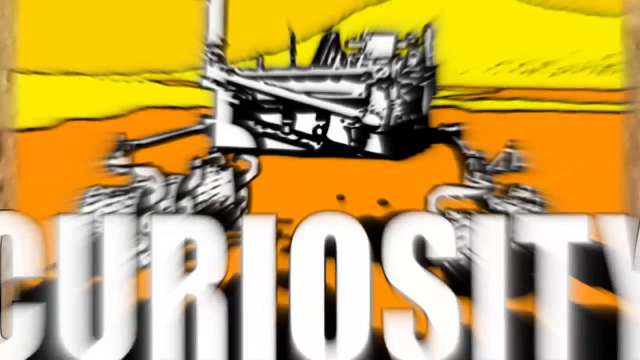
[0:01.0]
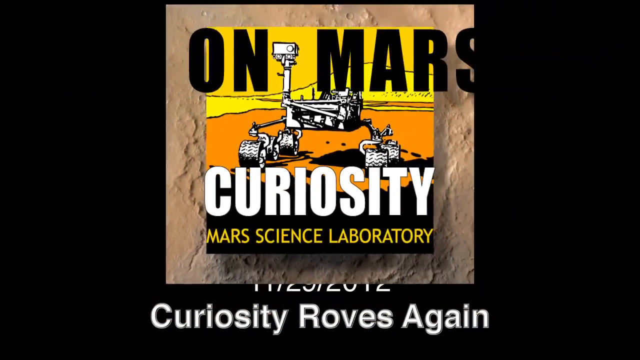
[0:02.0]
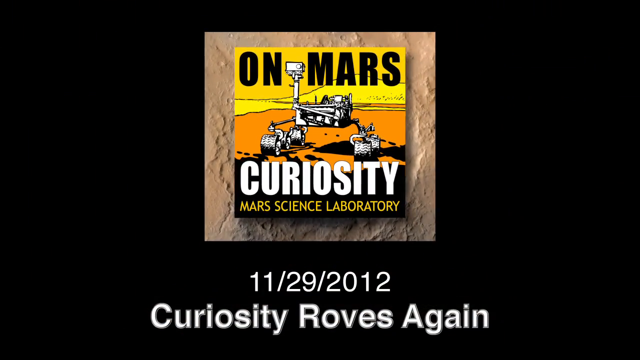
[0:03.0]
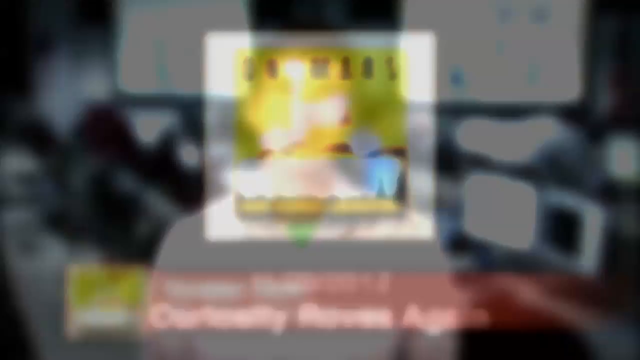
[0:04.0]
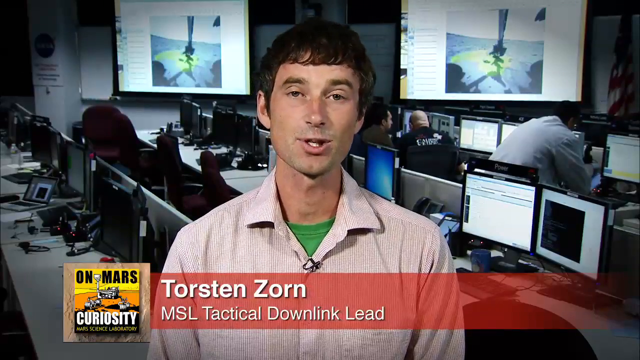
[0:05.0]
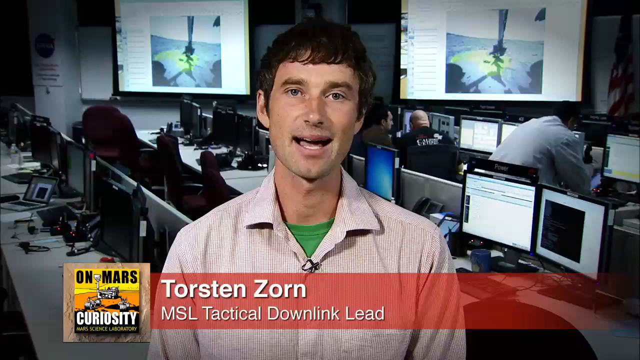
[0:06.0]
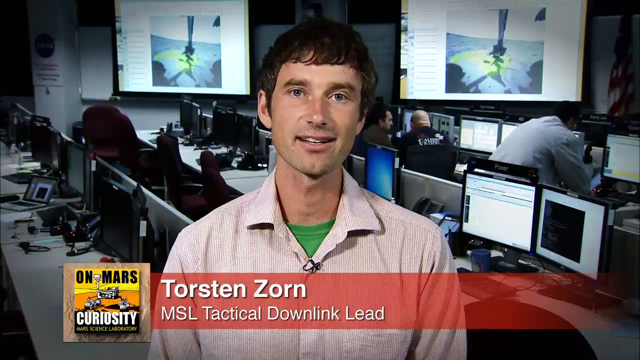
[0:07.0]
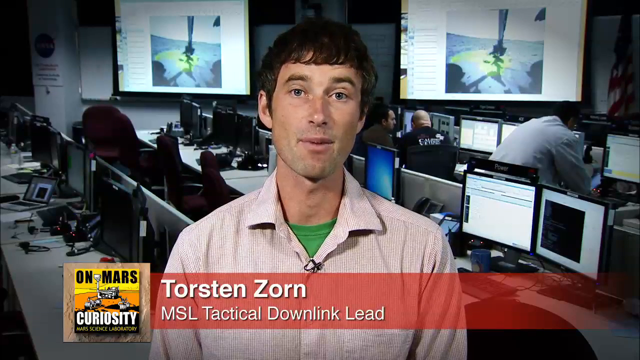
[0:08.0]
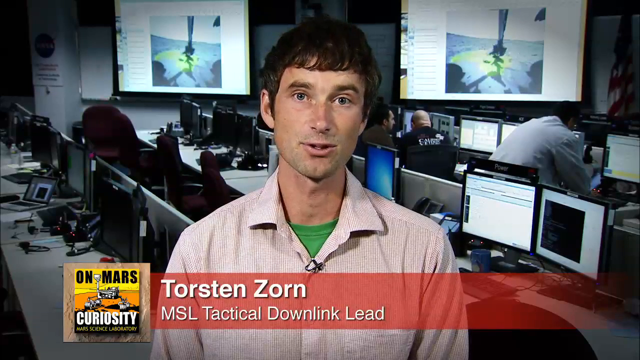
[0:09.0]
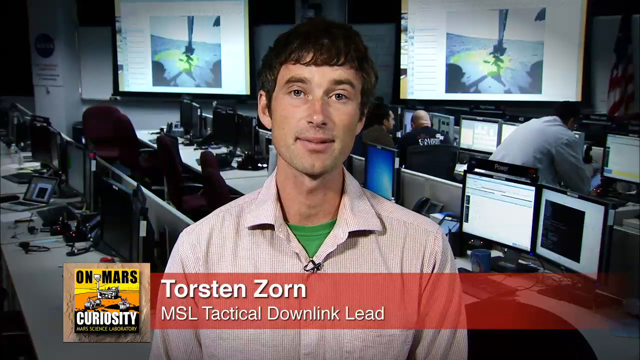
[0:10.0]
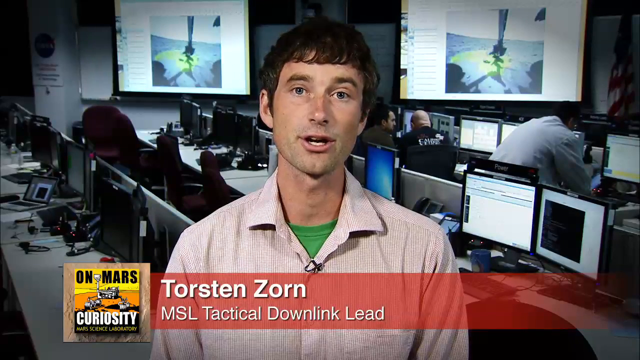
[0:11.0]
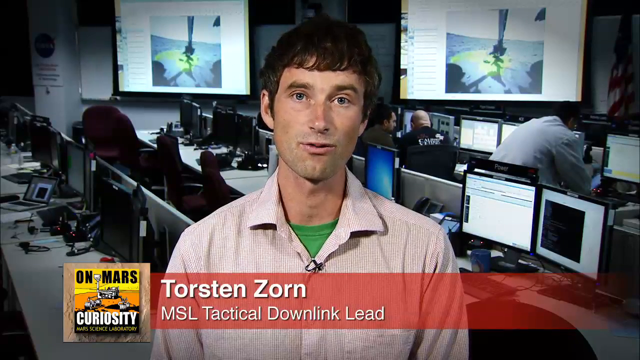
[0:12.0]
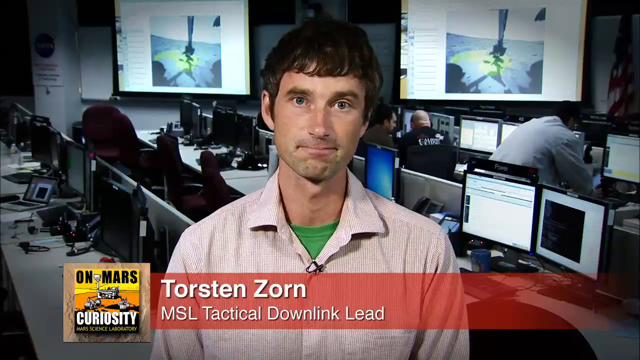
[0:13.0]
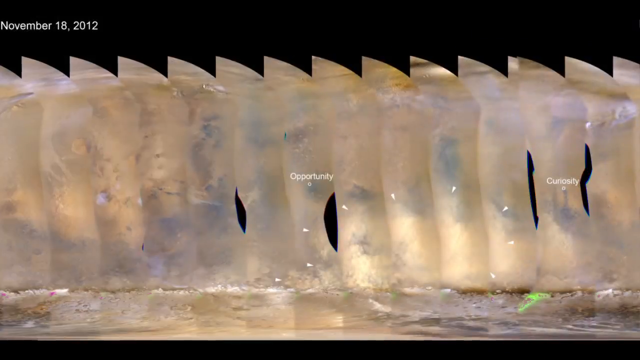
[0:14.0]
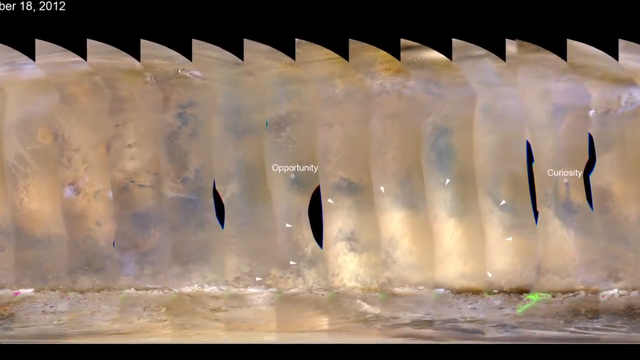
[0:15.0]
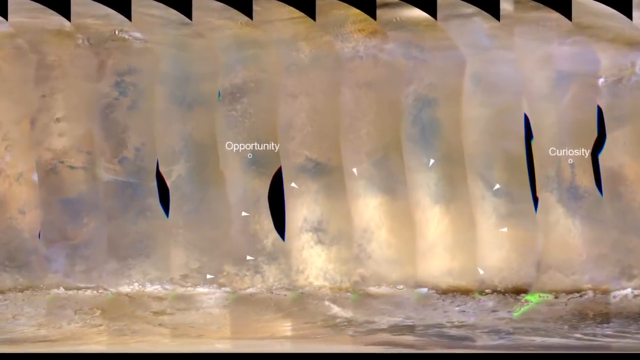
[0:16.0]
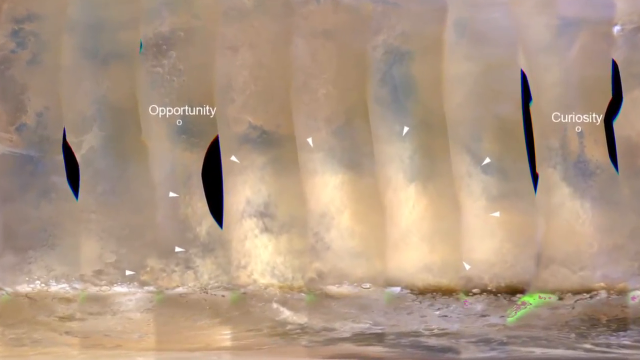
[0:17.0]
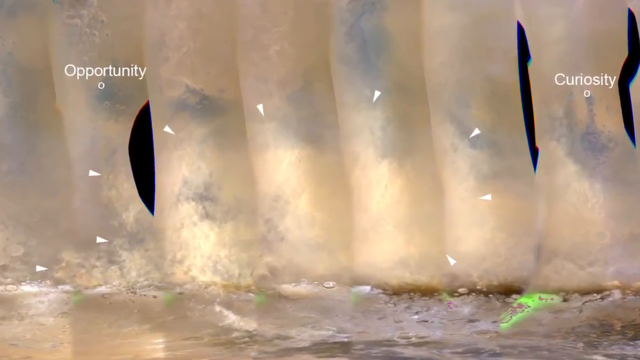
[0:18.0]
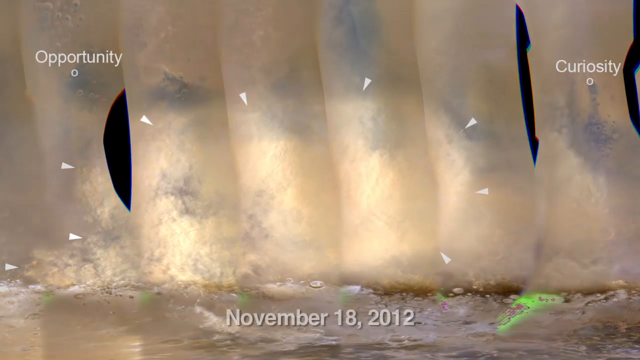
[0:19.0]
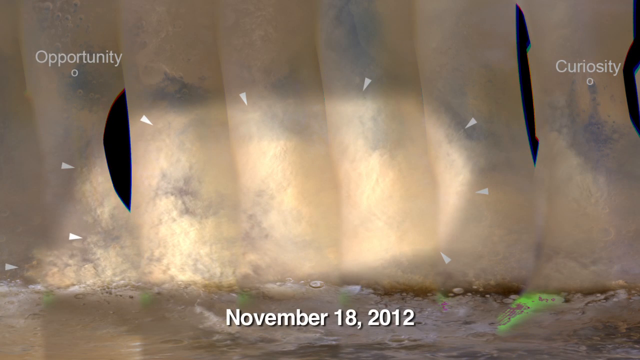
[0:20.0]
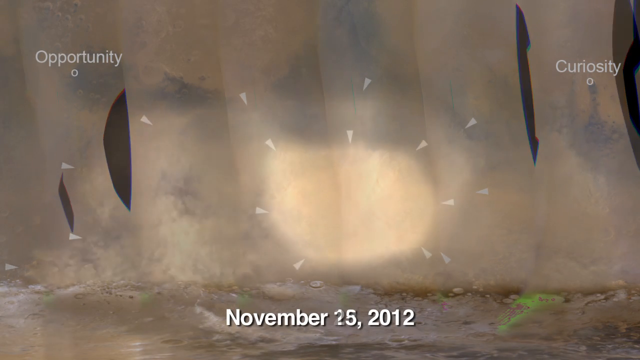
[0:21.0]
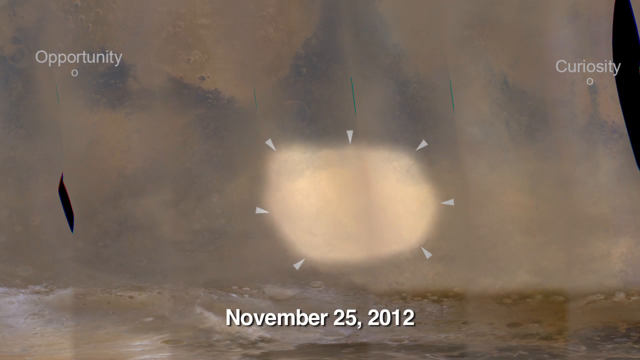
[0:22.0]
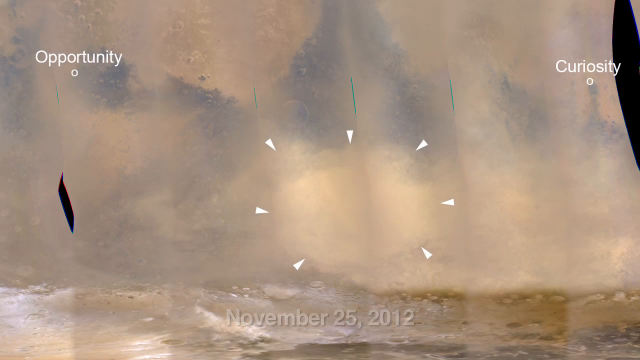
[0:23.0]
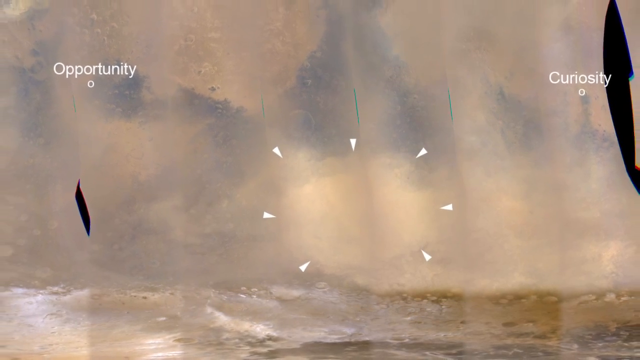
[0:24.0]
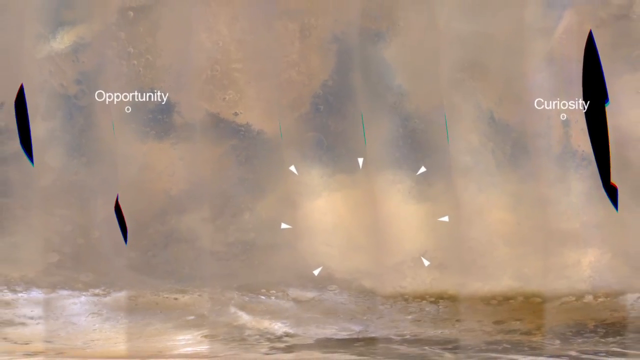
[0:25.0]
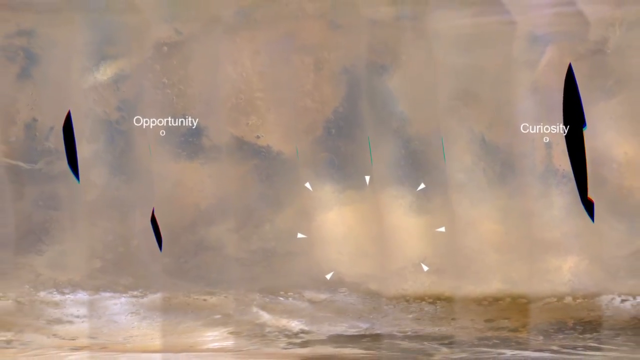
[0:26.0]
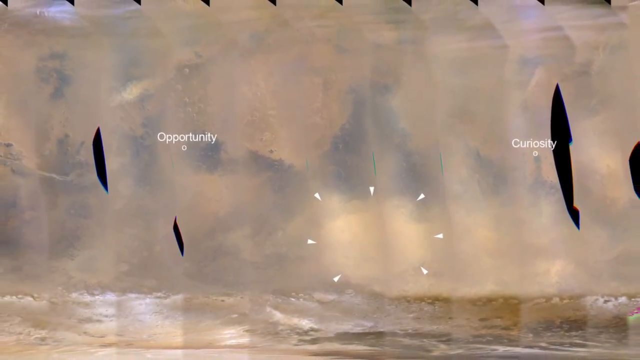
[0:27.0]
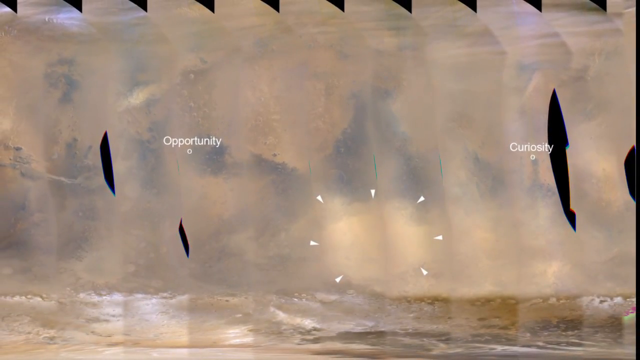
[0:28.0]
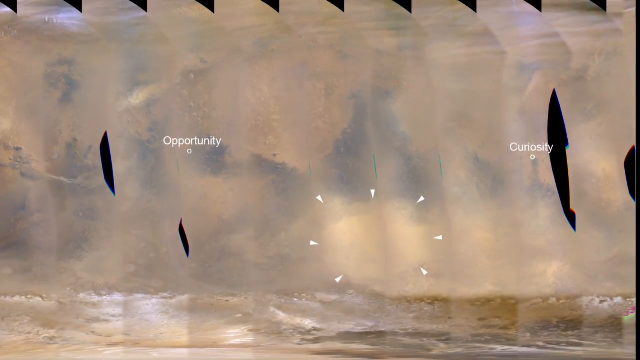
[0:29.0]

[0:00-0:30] The video concerns the Mars Science Laboratory, Curiosity. A person is talking, and something that seems to be a globe appears. The last part shows a vehicle that seems to be made especially for Mars, running on Mars and taking pictures.